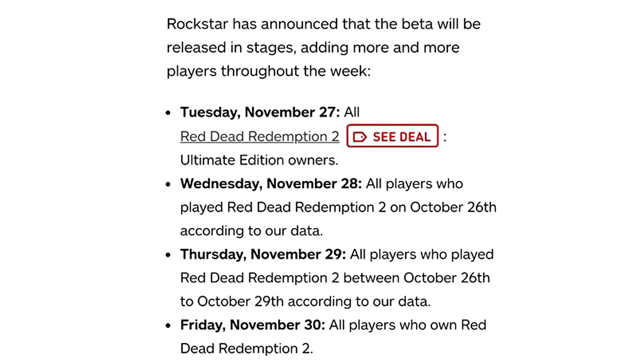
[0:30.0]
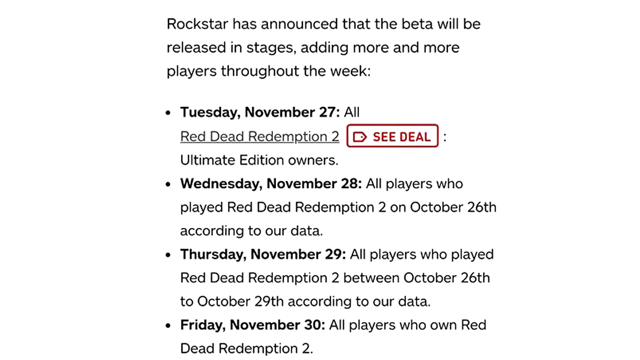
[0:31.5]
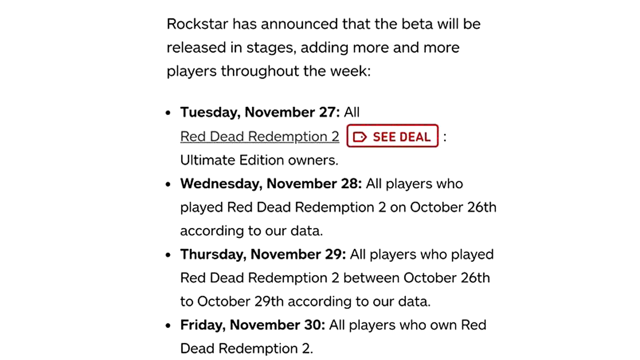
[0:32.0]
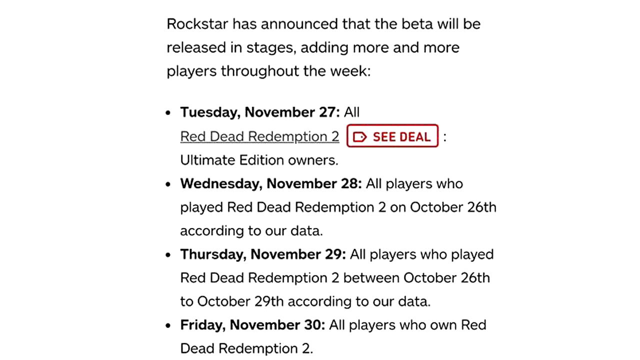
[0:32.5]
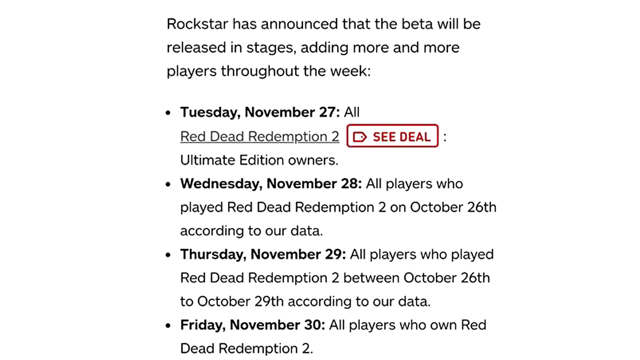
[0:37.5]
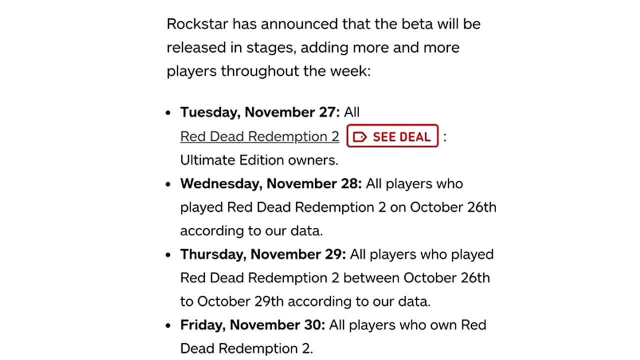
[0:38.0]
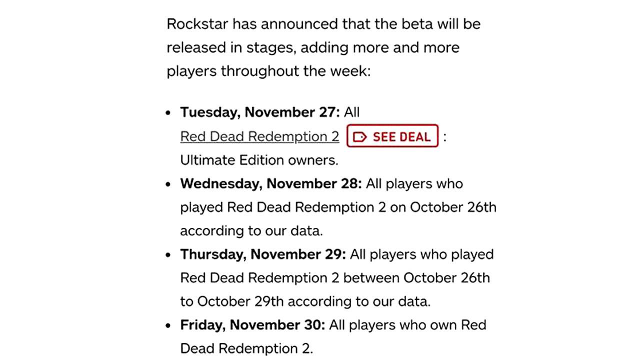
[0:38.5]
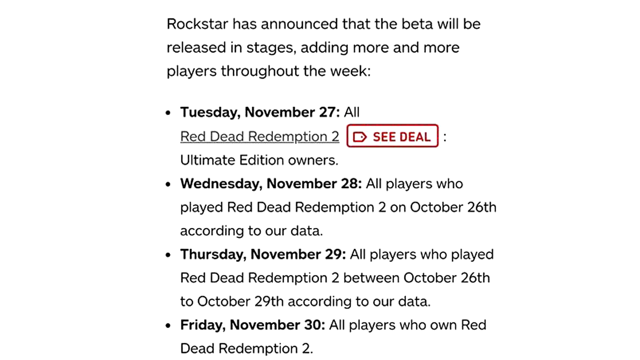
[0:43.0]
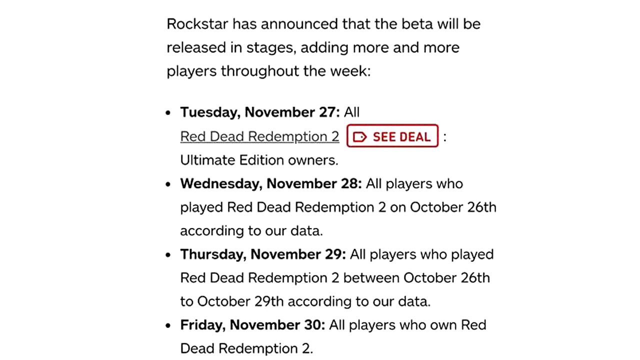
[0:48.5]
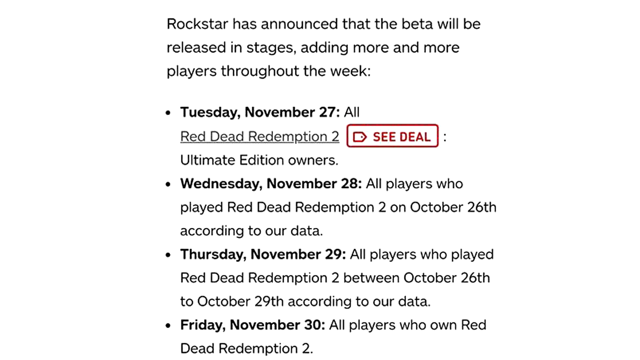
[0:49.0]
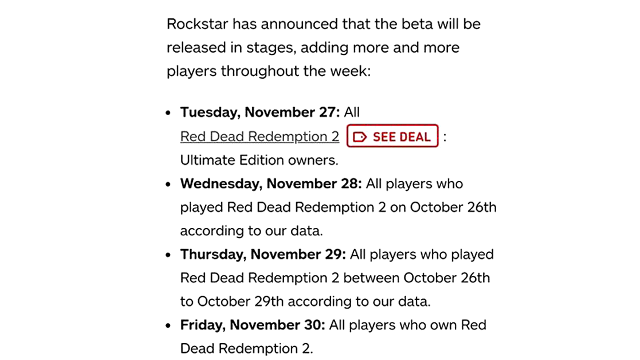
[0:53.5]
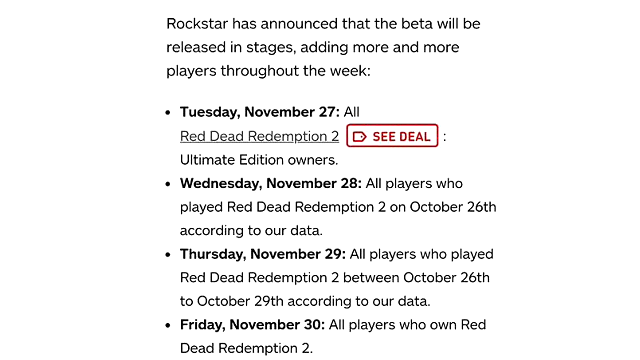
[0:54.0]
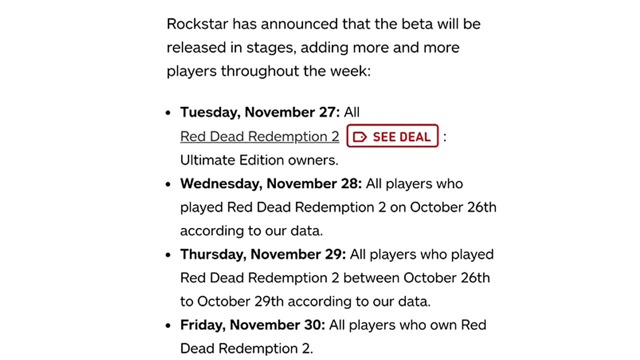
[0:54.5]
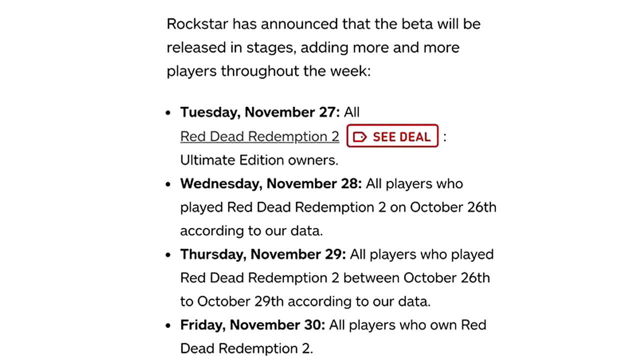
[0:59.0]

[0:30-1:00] A white background holds black text that reads: "Rockstar has announced that the beta will be released in stages, adding more and more players throughout the week." It lists Tuesday, November 27th for Red Dead Redemption 2 SEA Deal Ultimate Edition owners; "Wednesday, November 28th, all players who played Red Dead Redemption 2 on October 26th according to our data"; "Thursday, November 29th, all players who played Red Dead Redemption 2 between October 26th to October 29th according to our data"; and "Friday, November 30th, all players who own Red Dead Redemption 2." The SEA Deal button is red, and the Red Dead Redemption 2 text in the Tuesday, November 27th section is underlined. The text stays on the screen for a period of time; nothing else is shown.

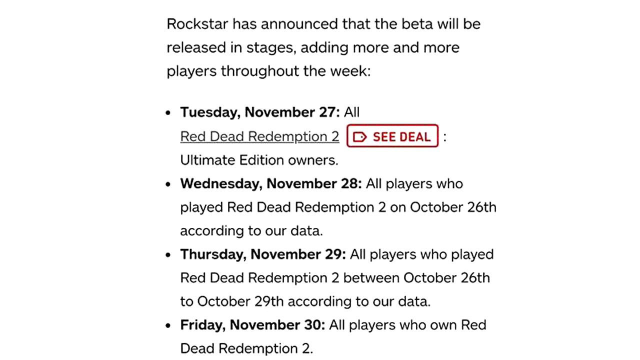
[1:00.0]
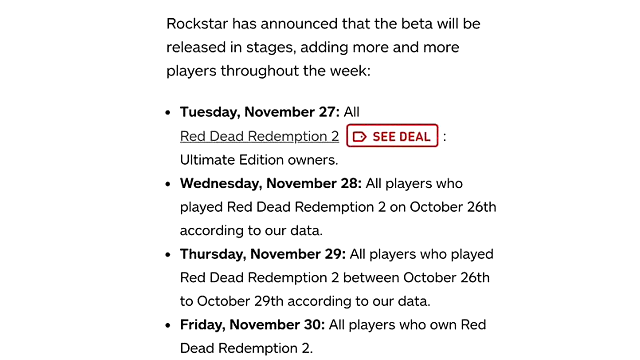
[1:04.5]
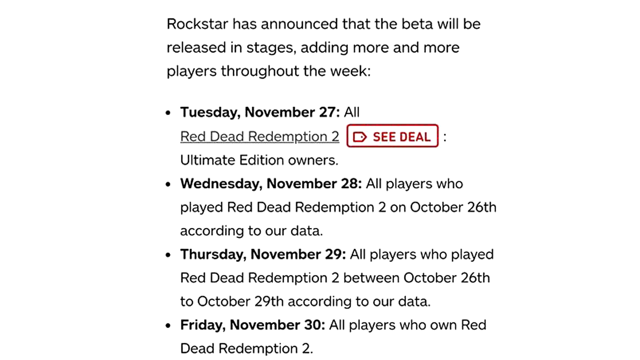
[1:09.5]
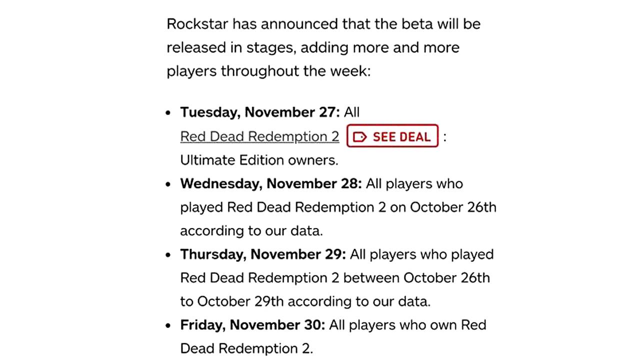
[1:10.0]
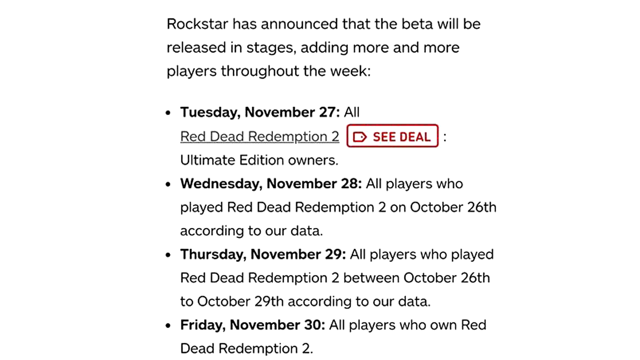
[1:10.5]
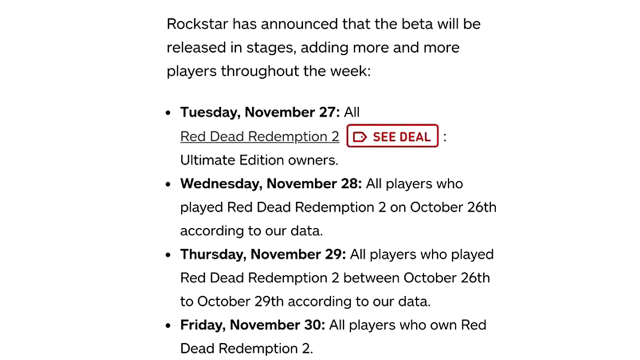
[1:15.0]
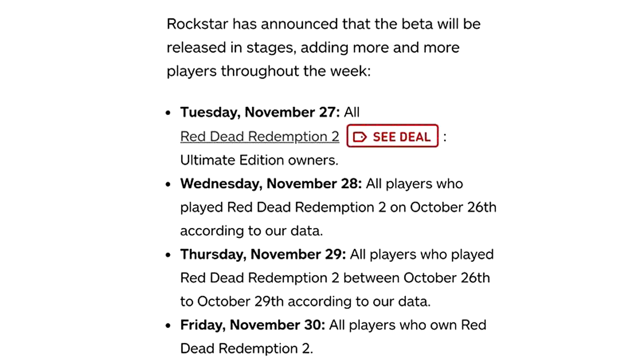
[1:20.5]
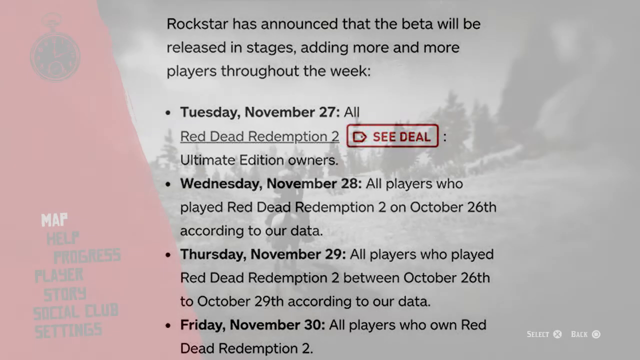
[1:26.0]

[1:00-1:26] The white background with black text continues: "Rockstar has announced that the beta will be released in stages, adding more and more players throughout the week." It lists Tuesday, November 27th for Red Dead Redemption 2 C-Deal Ultimate Edition owners; "Wednesday, November 28th, all players who played Red Dead Redemption 2 on October 26th according to our data"; "Thursday, November 29th, all players who played Red Dead Redemption 2 between October 26th to October 29th according to our data"; and "Friday, November 30th, all players who own Red Dead Redemption 2." The Red Dead Redemption 2 text under Tuesday, November 27th is underlined, and the C-Deal section is red. The text stays on the screen for the rest of the video; nothing else is shown.